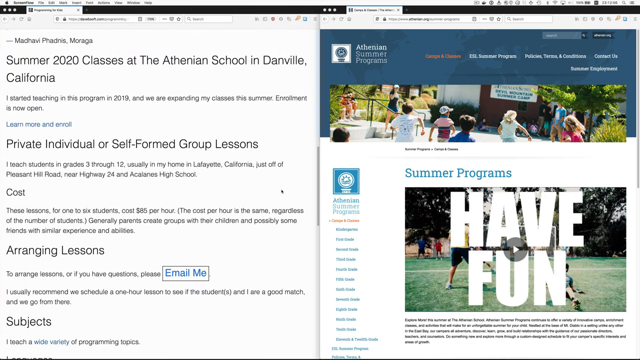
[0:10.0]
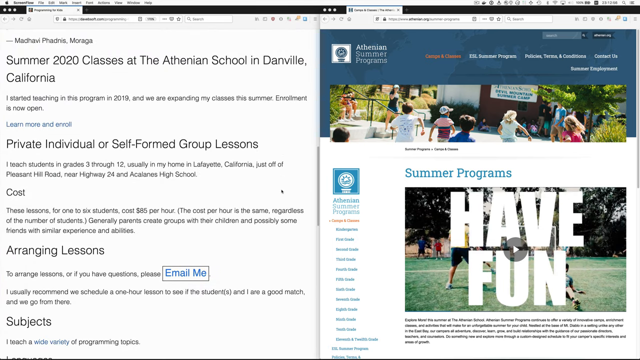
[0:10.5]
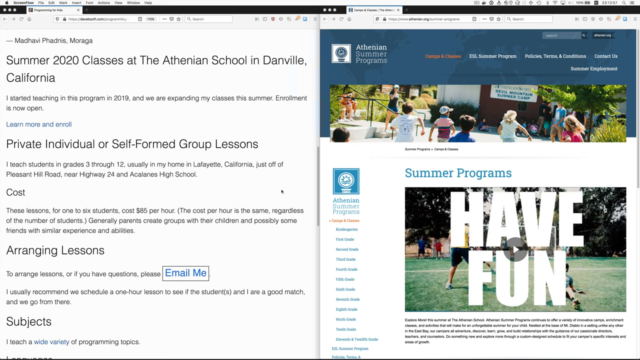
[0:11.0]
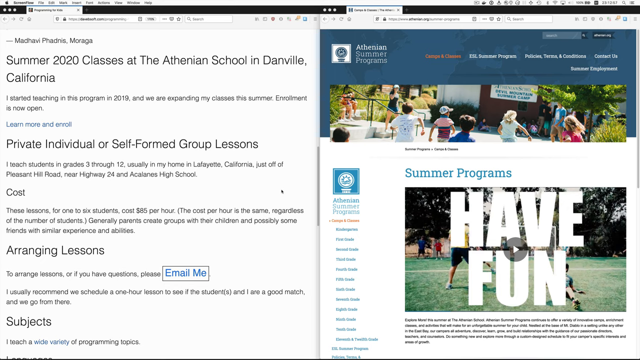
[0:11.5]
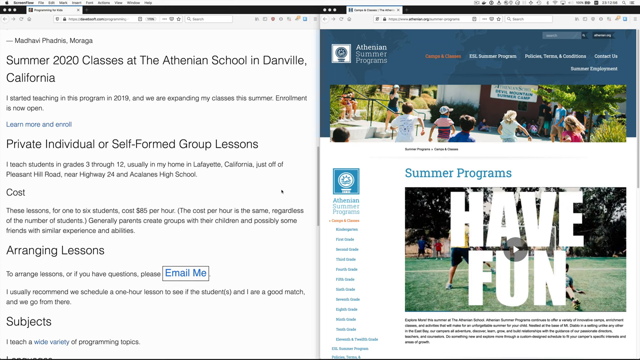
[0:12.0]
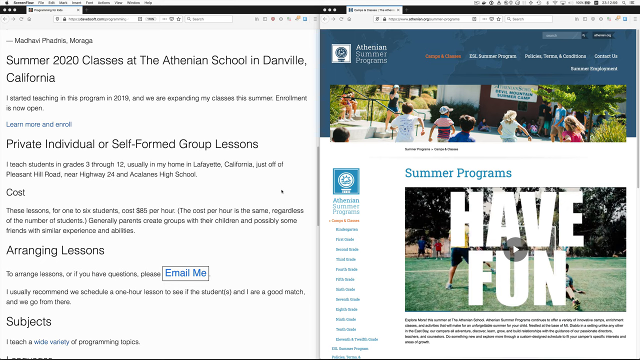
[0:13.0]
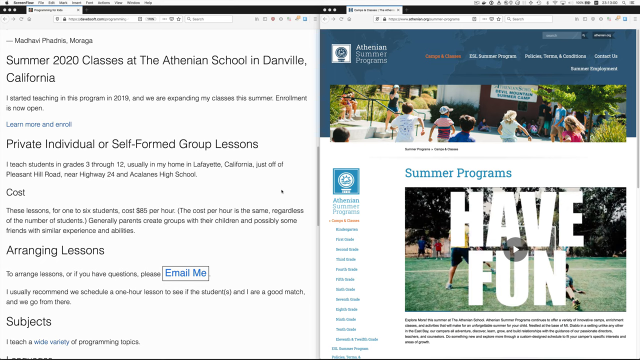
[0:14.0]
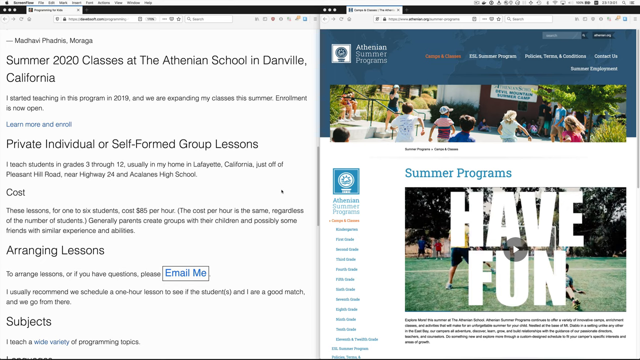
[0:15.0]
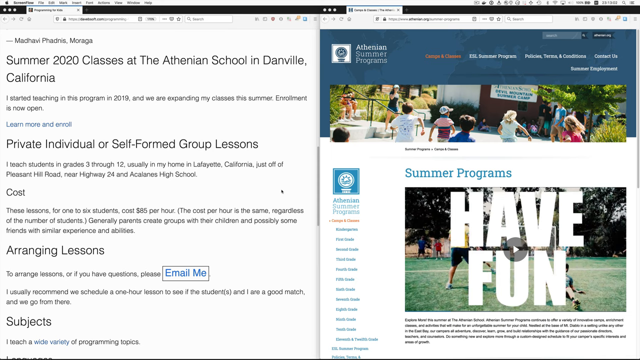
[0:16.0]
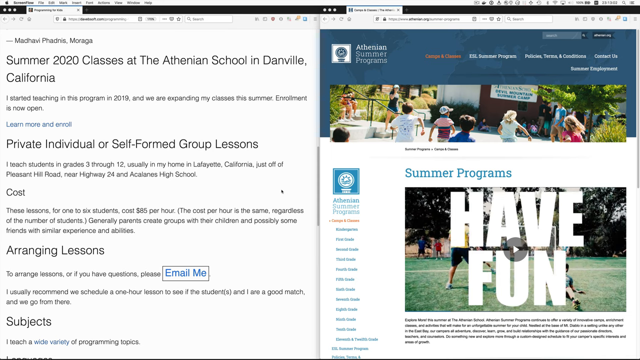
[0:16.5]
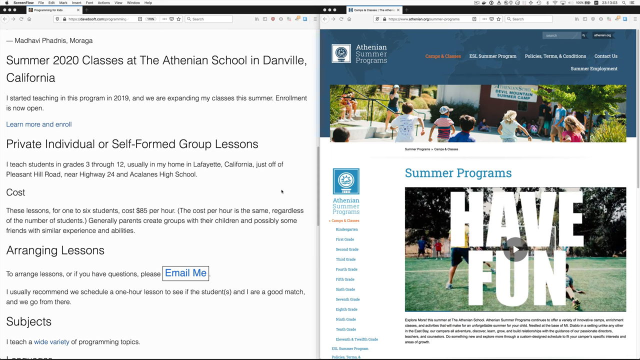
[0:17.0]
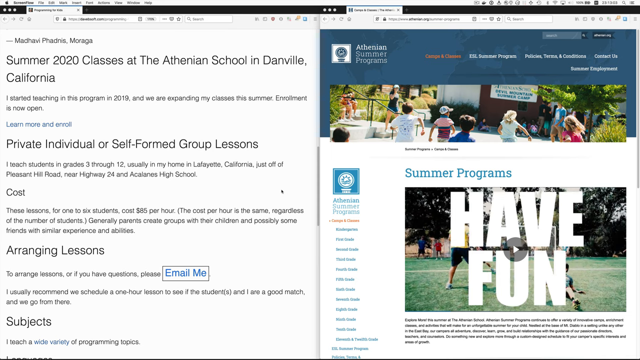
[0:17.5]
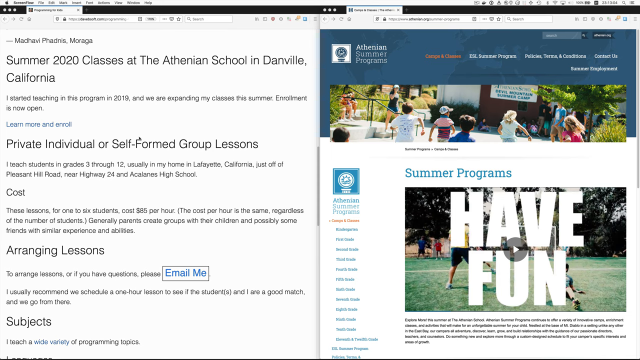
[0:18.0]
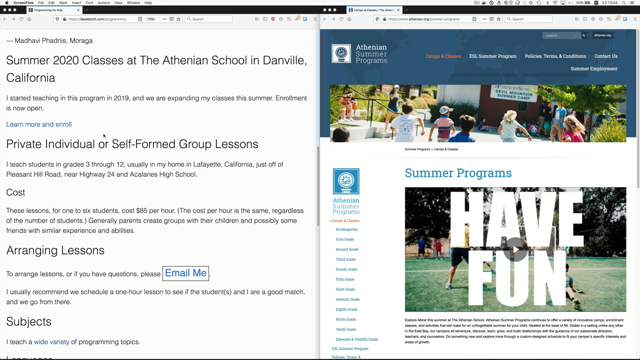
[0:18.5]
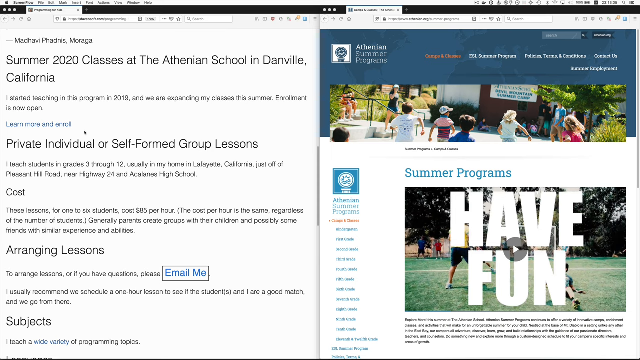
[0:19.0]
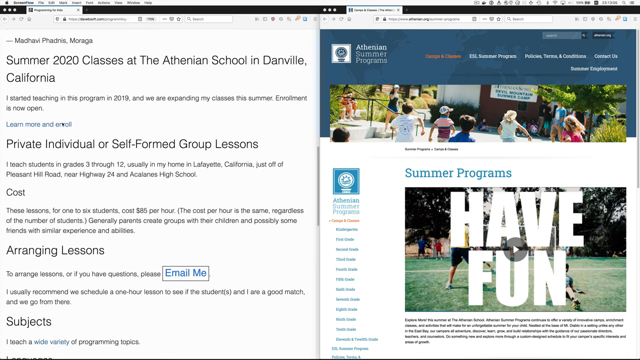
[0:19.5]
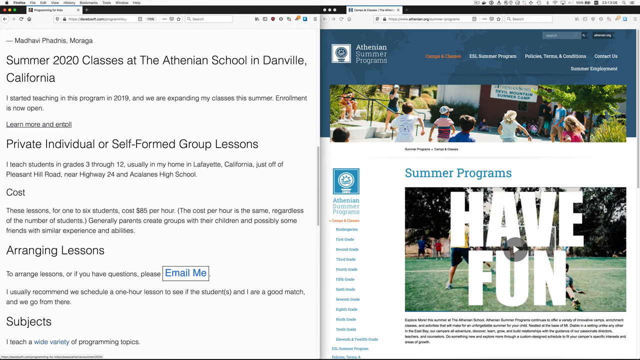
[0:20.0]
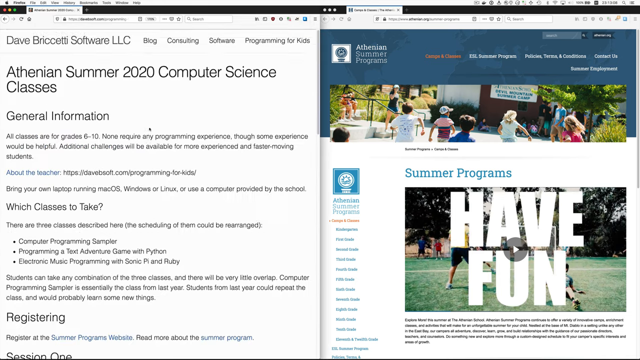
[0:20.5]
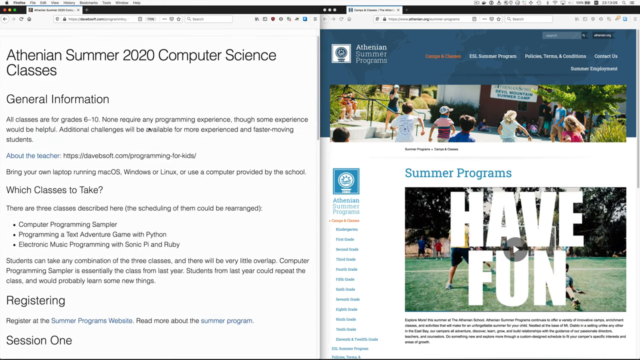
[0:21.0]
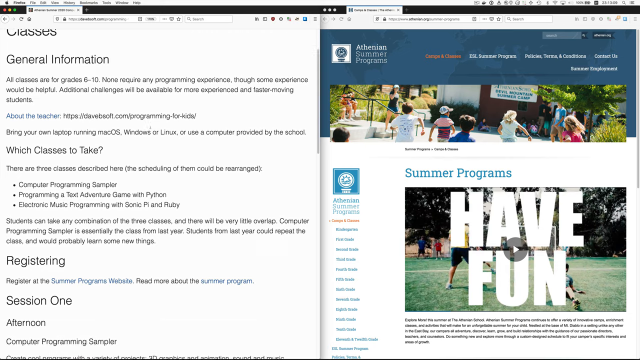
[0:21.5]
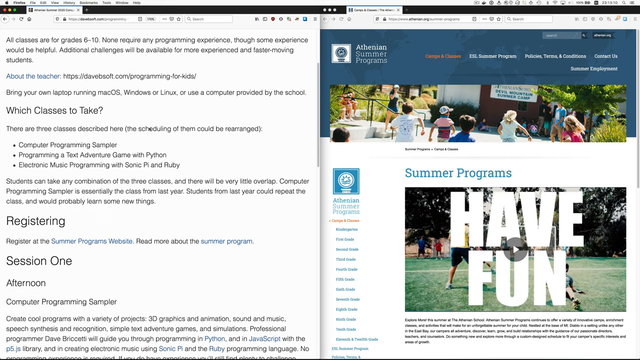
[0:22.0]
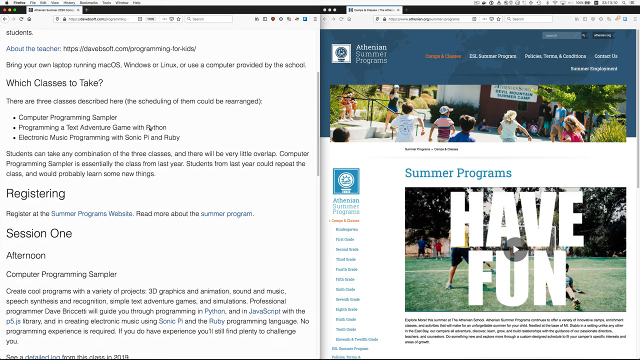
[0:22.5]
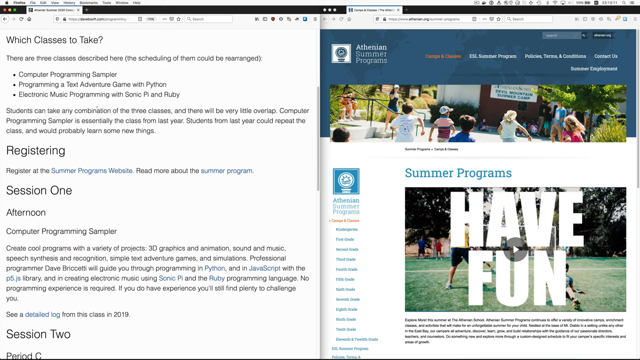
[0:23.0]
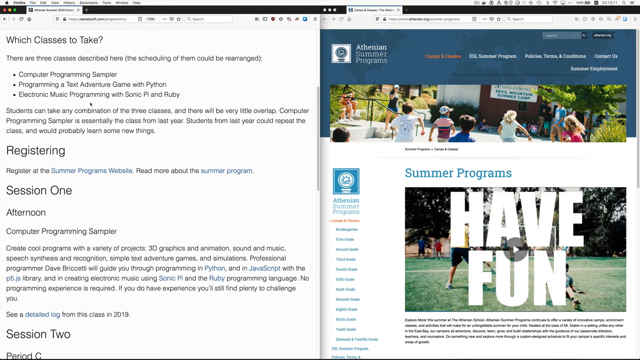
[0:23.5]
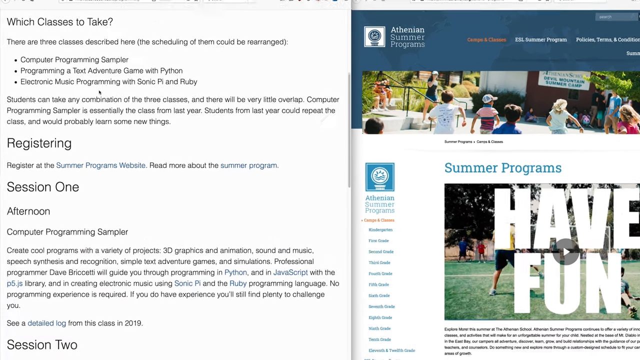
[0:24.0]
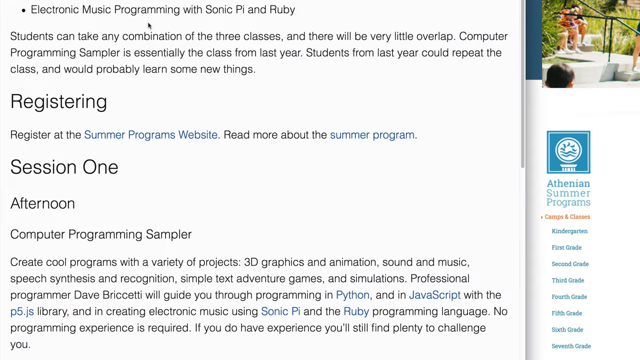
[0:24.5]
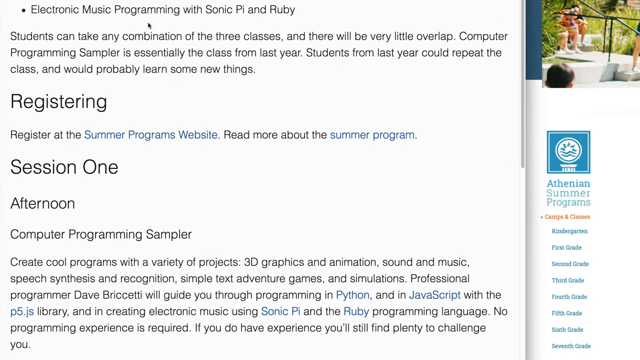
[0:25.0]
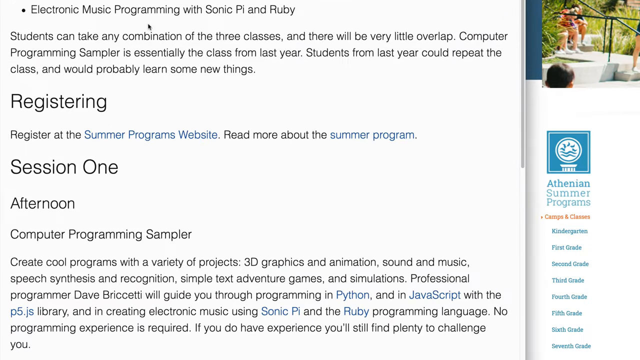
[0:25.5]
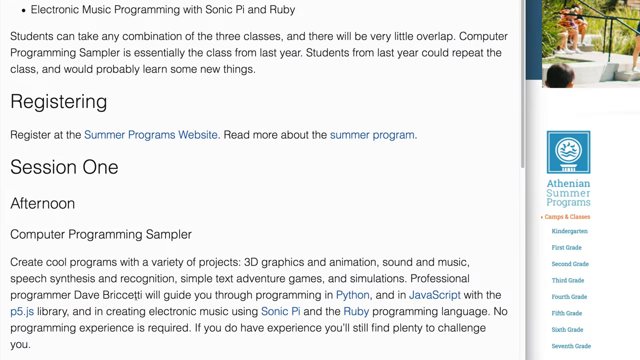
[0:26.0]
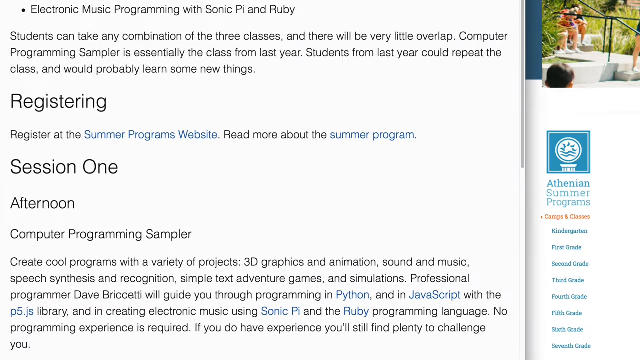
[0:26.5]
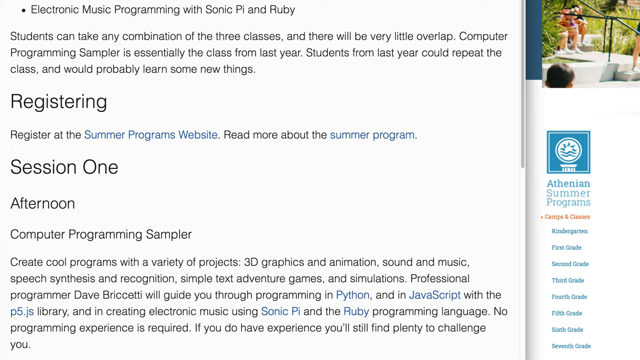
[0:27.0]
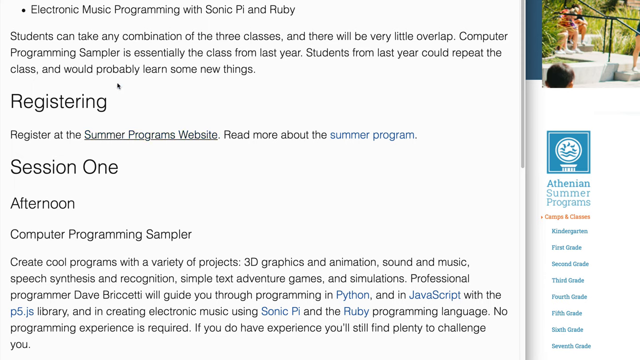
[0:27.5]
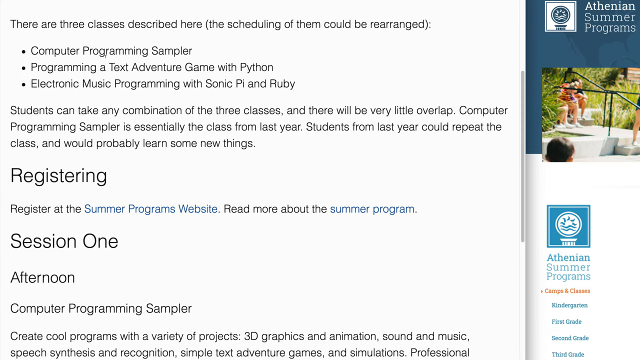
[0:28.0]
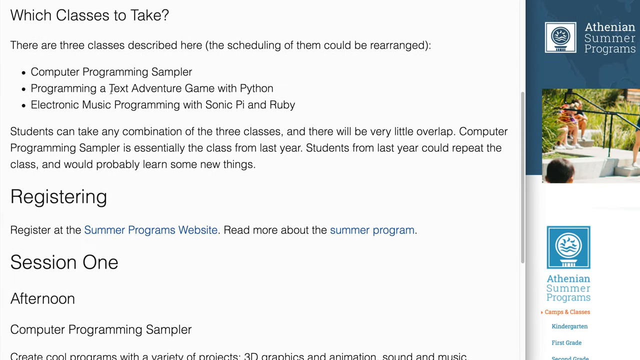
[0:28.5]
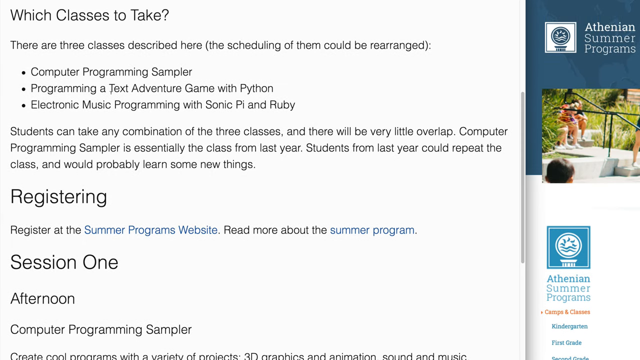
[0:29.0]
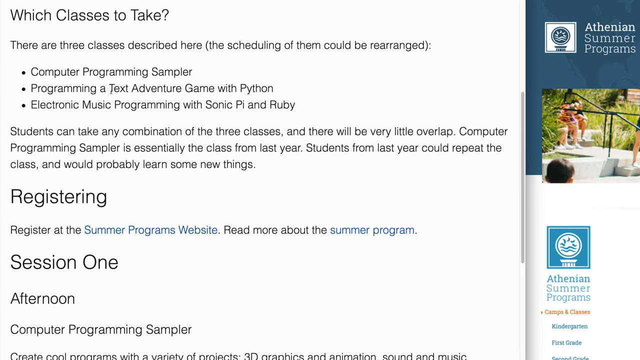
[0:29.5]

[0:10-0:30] Information is shown in the top left-hand side, with the words "Summer 2020 classes at the Athenian School in Danville" and a lot of information about the program, including the words "I started teaching in this programme in 2019, and we are expanding my classes this summer. Enrolment is now open." Underneath is information about private, individual, or self-formed group lessons, about the cost, and about arranging lessons. It says "to arrange lessons, or if you have questions, please email me" in blue with a box around it, presumably a link that opens an email to this person. On the right-hand side of the screen is the Athenian Summer Programmes website page, which looks as though it has a Summer Programmes video that visitors can watch. There appears to be a lot of information on the screen. The view then returns to the initial image, followed by a close-up of the registering section of the page.